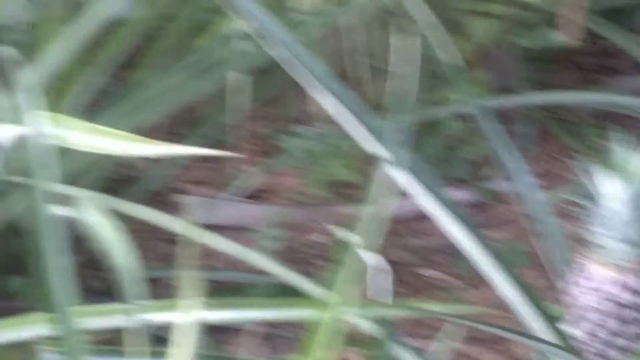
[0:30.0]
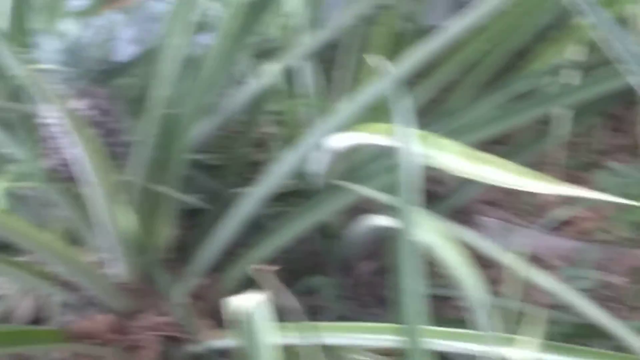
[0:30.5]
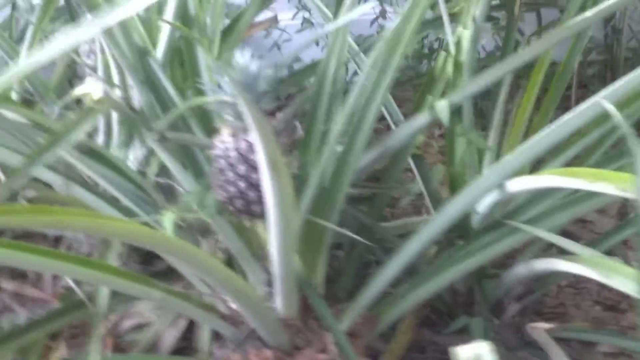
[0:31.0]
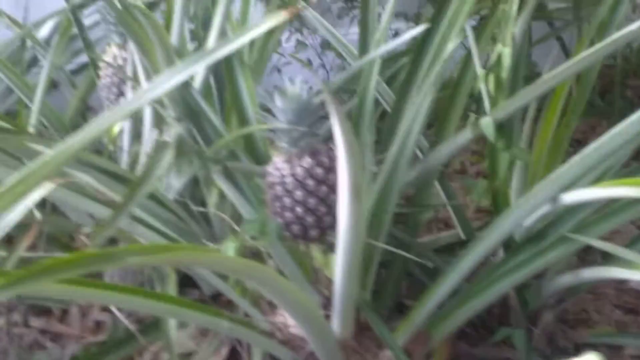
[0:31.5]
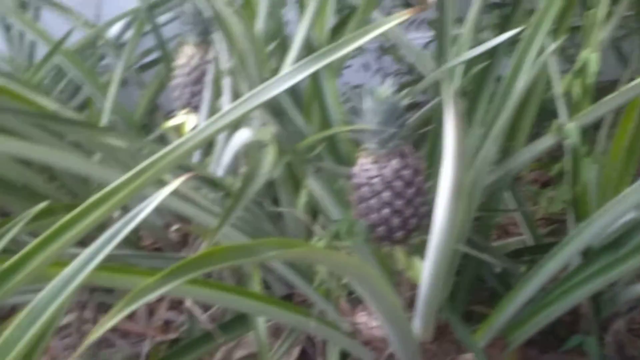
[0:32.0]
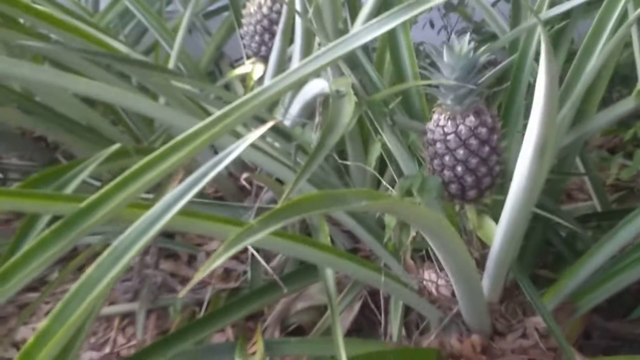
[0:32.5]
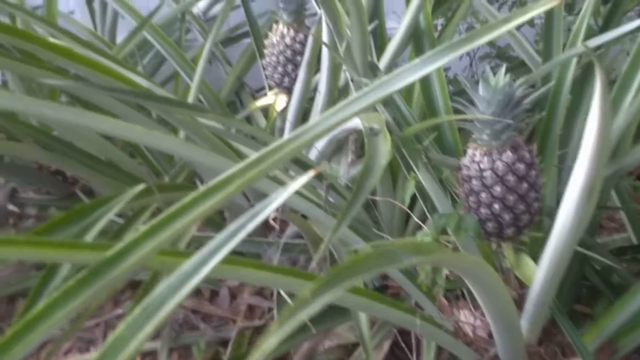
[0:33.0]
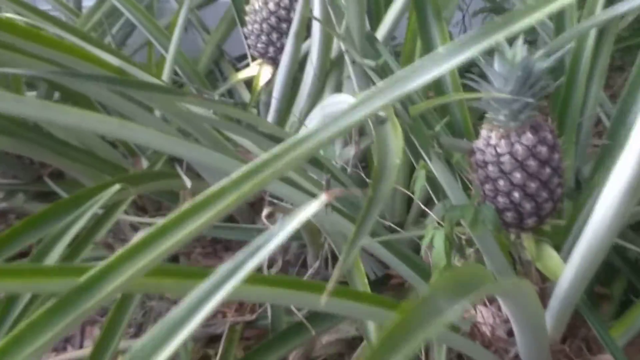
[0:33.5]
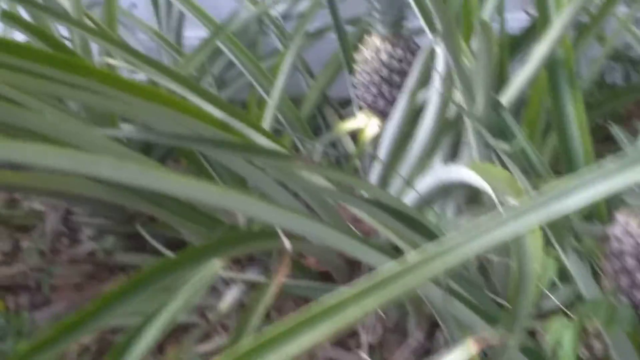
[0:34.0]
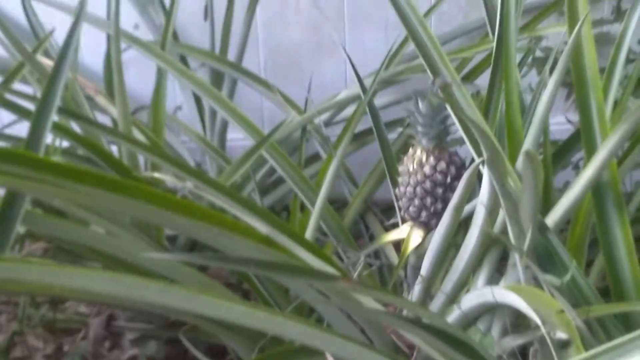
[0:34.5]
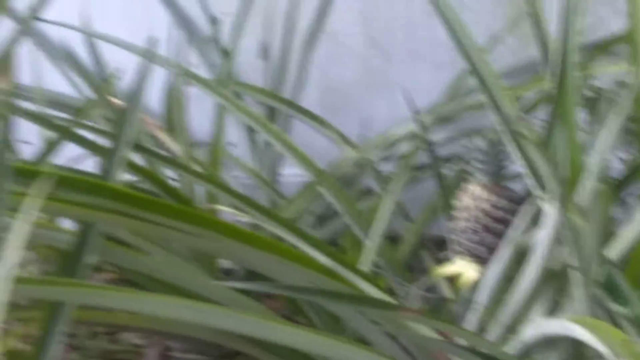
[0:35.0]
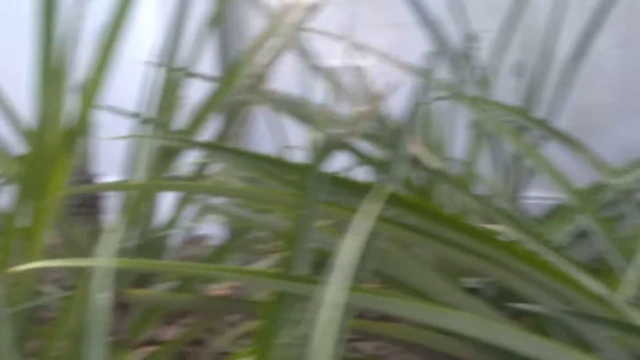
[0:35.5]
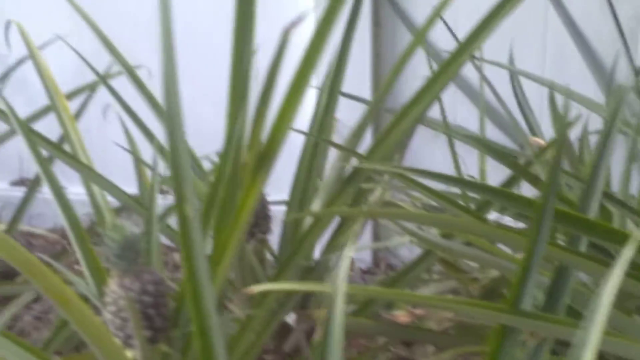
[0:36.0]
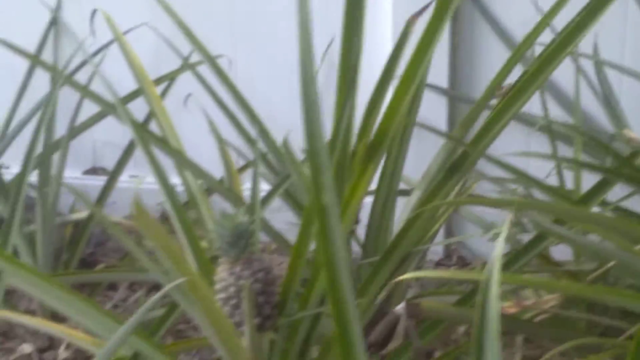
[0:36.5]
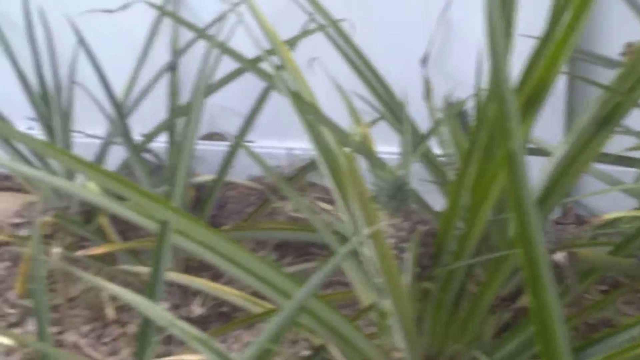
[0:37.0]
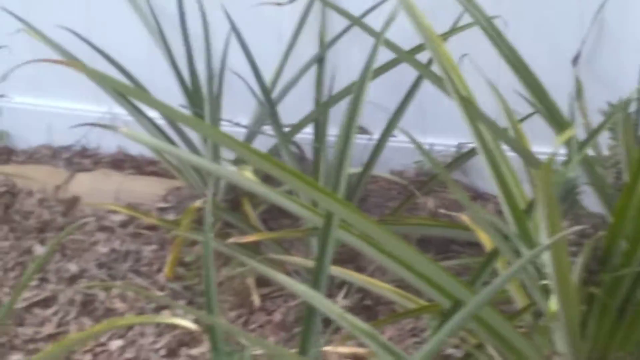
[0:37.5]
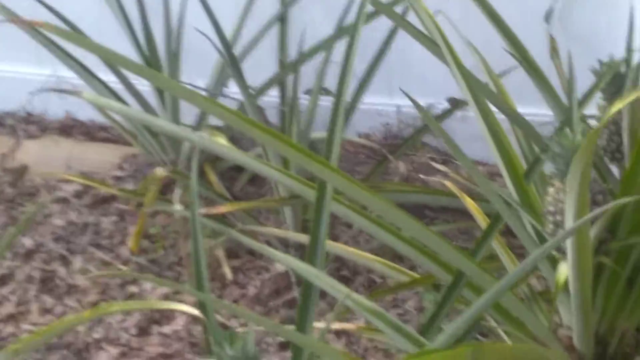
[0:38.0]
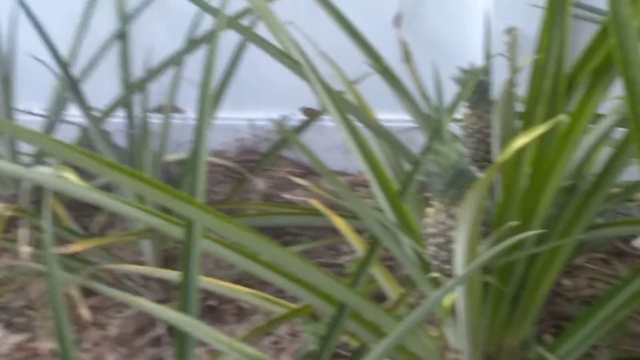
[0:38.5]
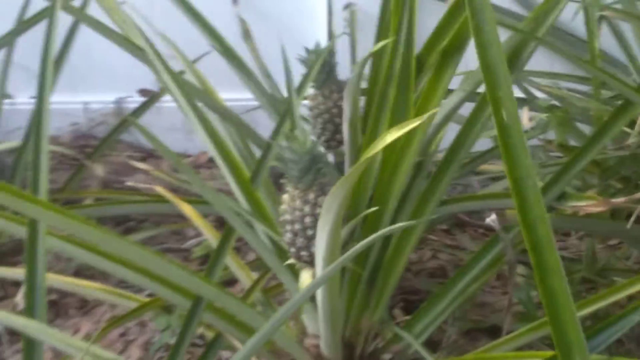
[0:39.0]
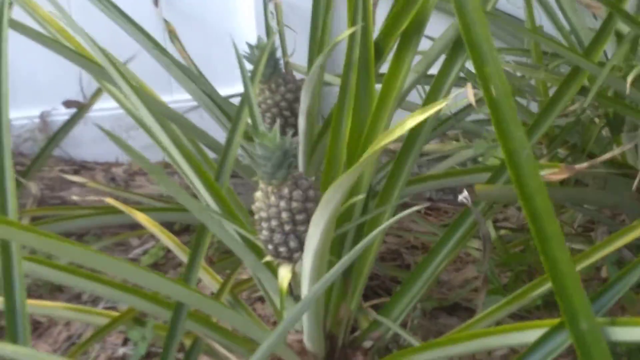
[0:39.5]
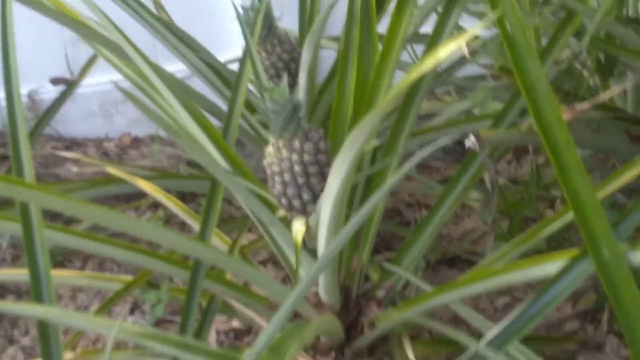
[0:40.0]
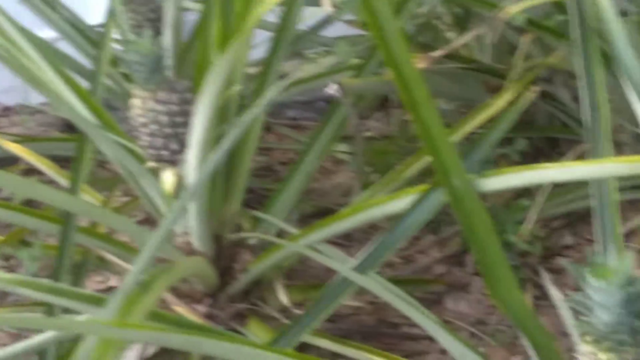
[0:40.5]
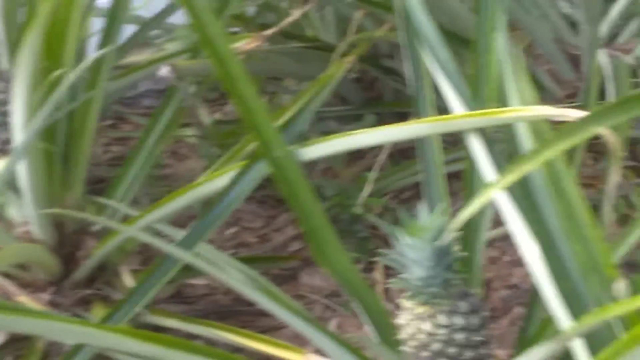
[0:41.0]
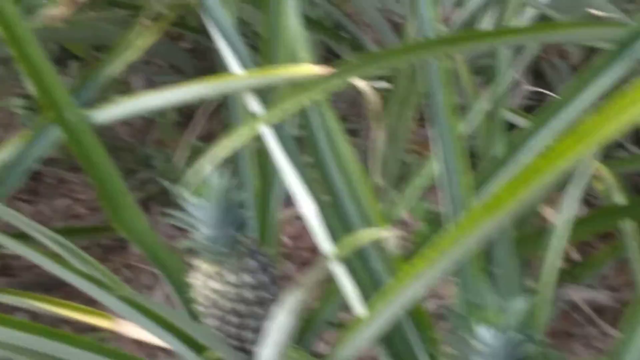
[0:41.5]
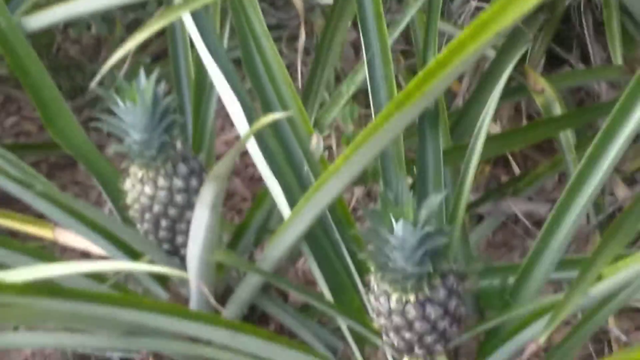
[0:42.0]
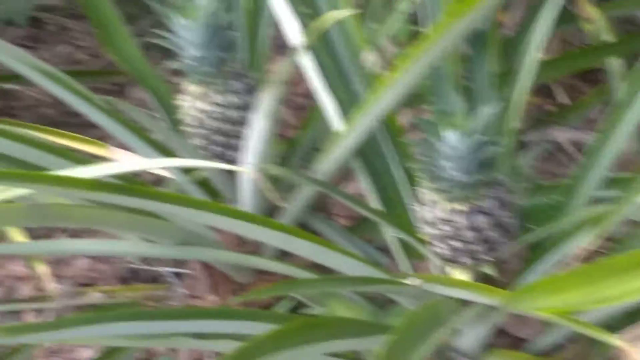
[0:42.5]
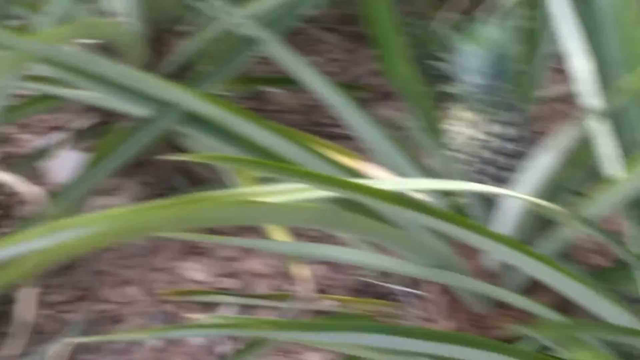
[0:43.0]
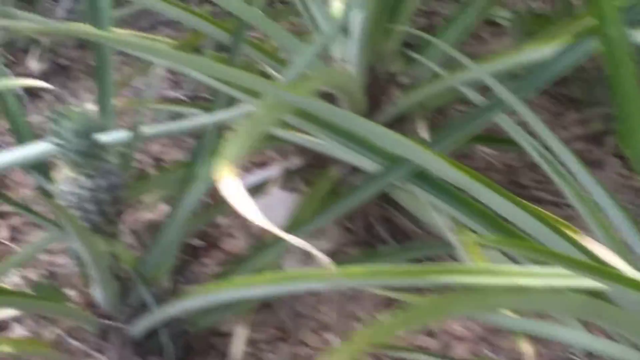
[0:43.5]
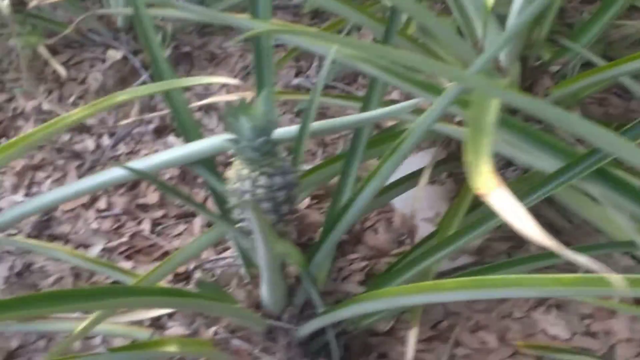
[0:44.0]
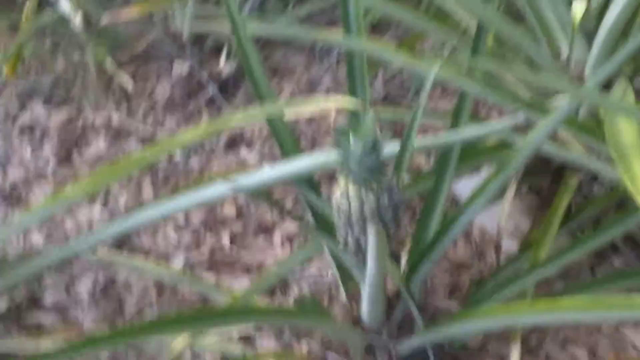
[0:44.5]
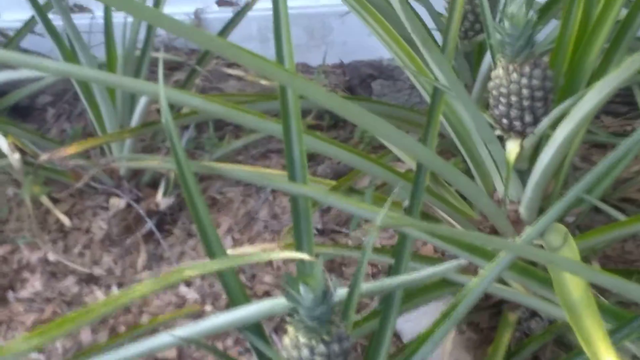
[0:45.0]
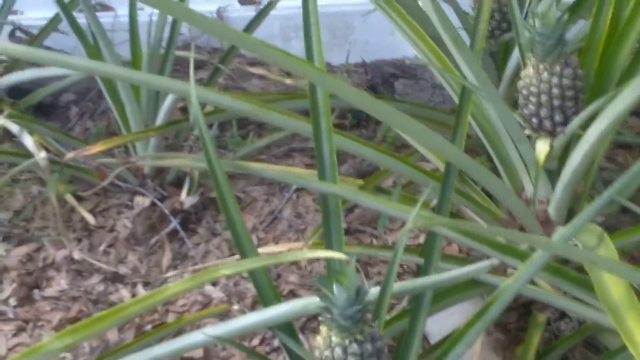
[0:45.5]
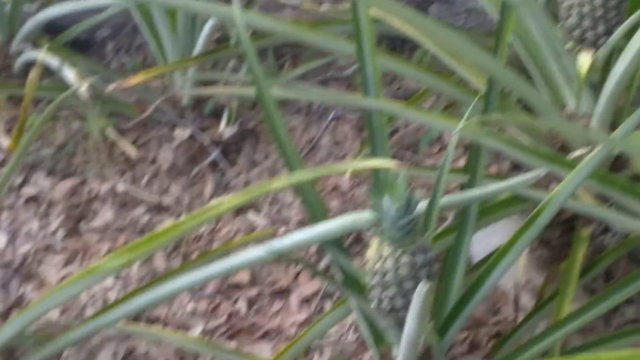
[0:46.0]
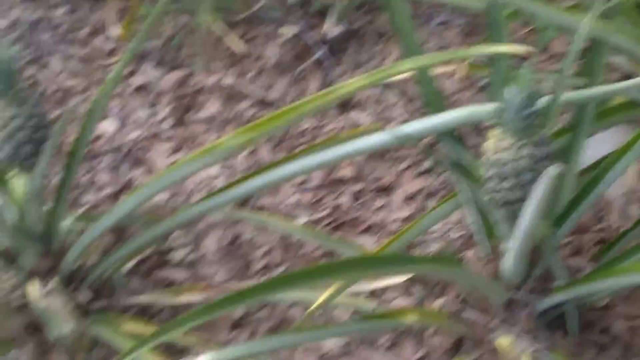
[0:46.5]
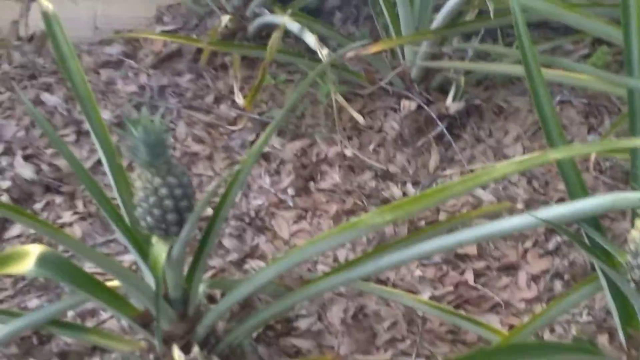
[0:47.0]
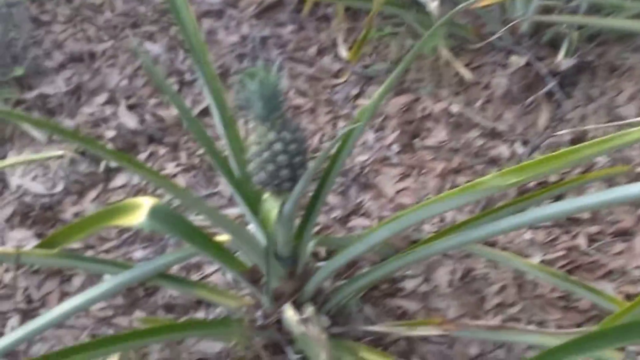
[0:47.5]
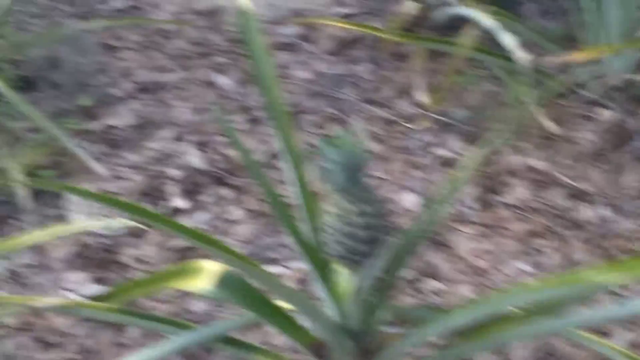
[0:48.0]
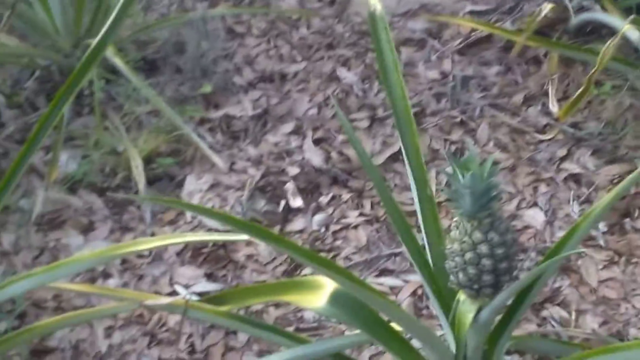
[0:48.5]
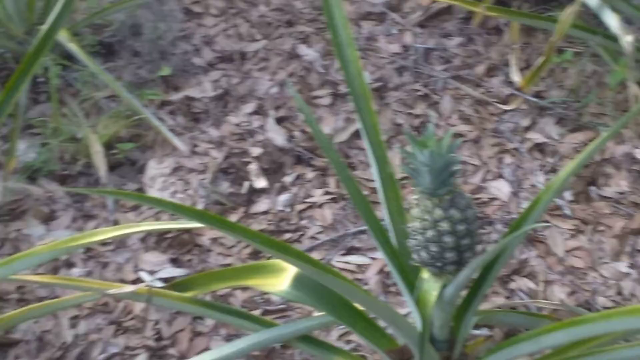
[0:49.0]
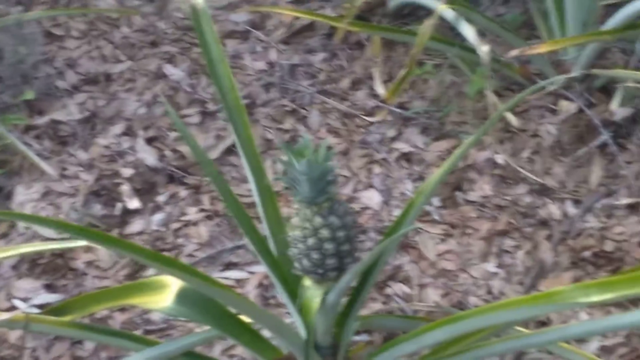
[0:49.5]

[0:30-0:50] The shot begins zoomed in very closely on a pineapple plant and immediately zooms left to look at each baby pineapple. It zooms left some more, following the garden to the left back toward where the video began. A white picket fence is behind the plant in the background, and brown mulch is on the ground between the plants. Some of the spiky green leaves are two-toned, dark green and light green, and some are dried yellow and bent over somewhat. The leaves are very long, perhaps at least two to three feet, coming up from the ground toward the sky or out just a little. The camera pans right and left, showing how low the baby pineapples are to the ground, and continues filming to show even more baby pineapples.